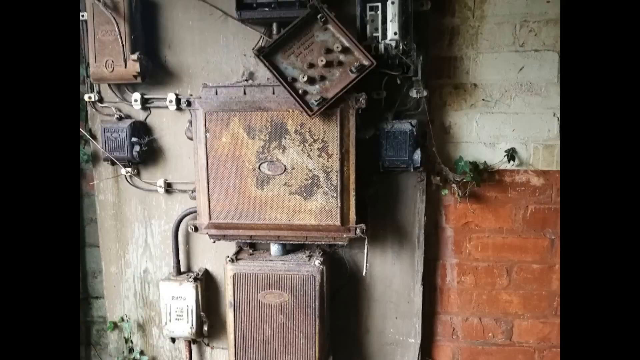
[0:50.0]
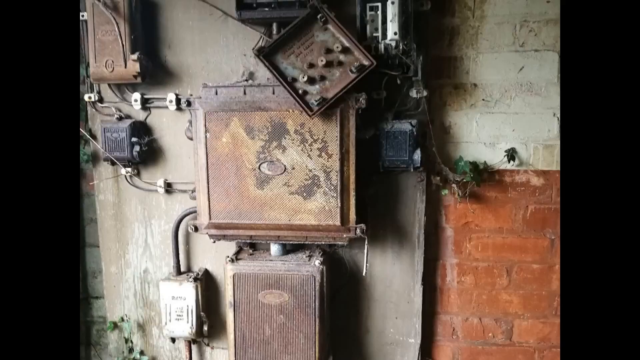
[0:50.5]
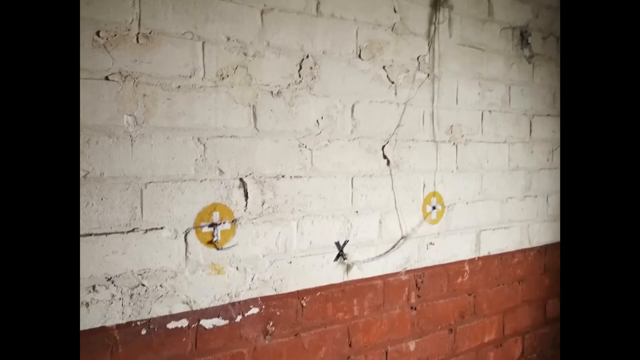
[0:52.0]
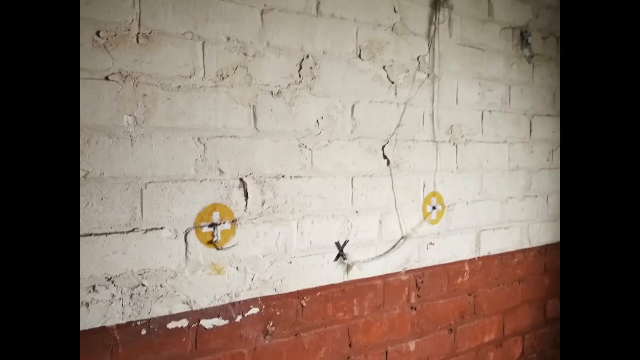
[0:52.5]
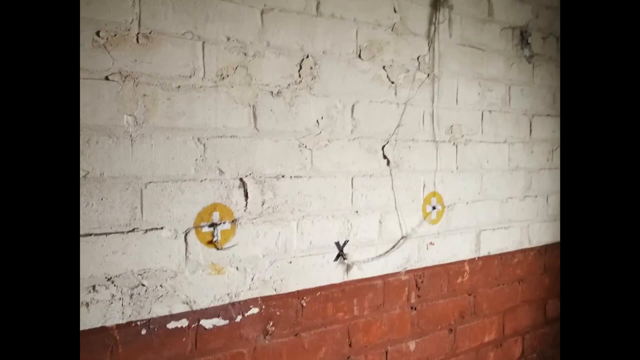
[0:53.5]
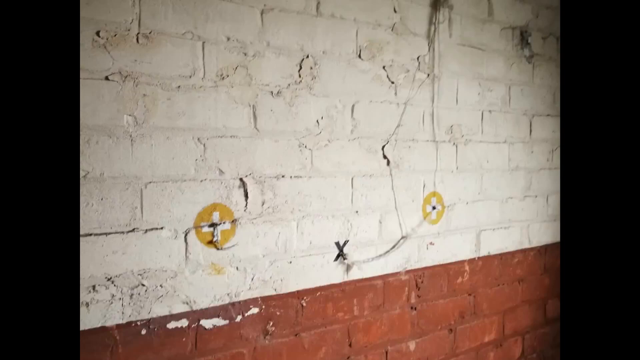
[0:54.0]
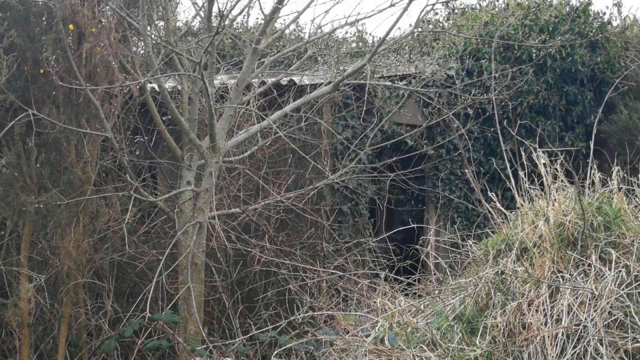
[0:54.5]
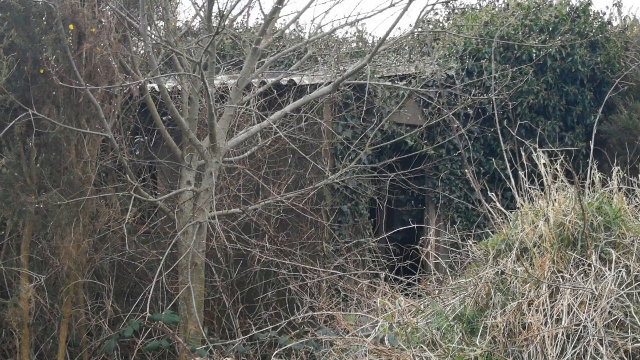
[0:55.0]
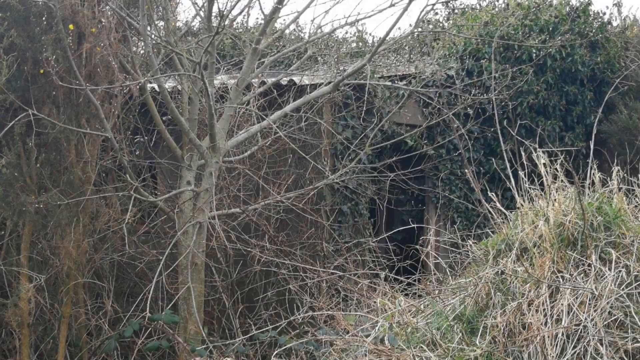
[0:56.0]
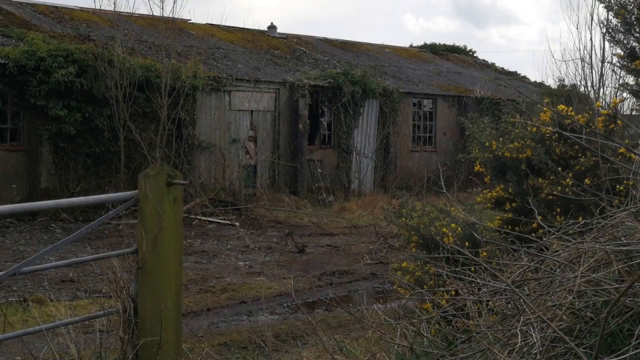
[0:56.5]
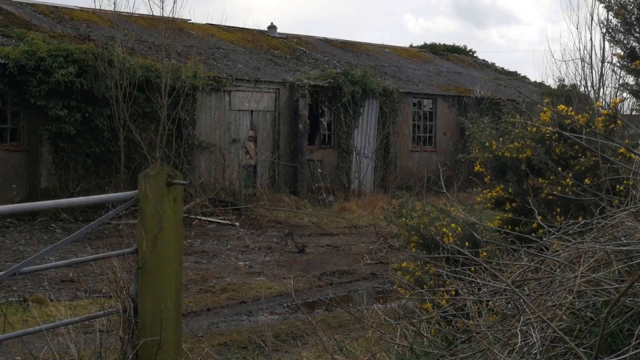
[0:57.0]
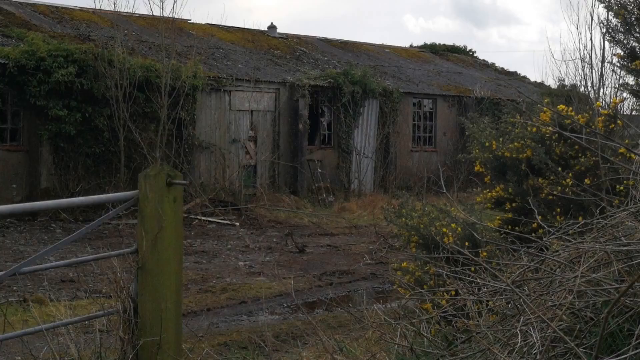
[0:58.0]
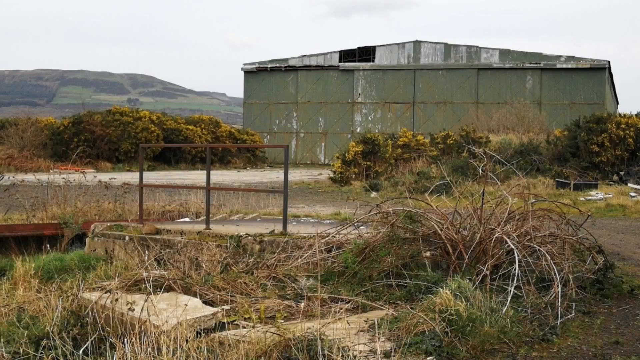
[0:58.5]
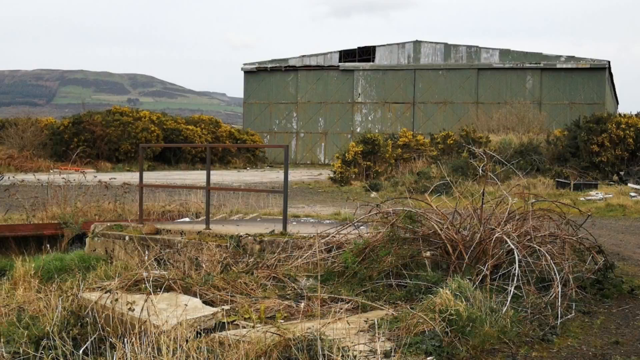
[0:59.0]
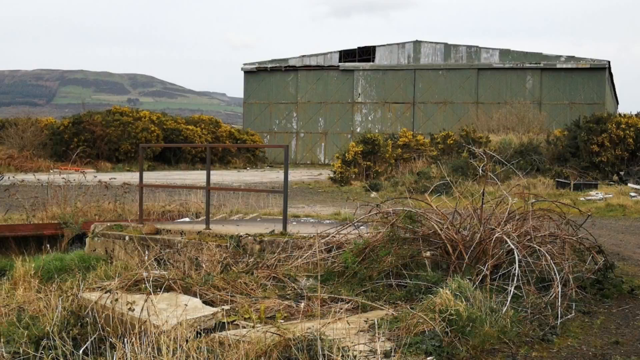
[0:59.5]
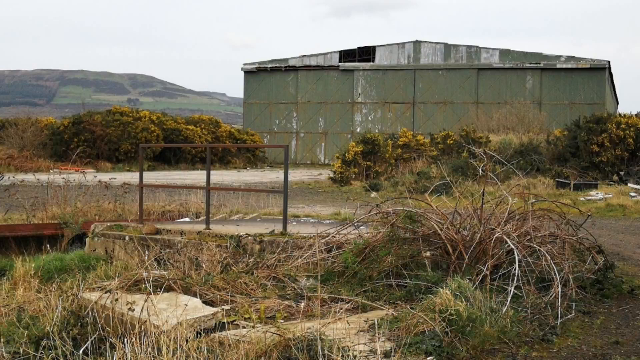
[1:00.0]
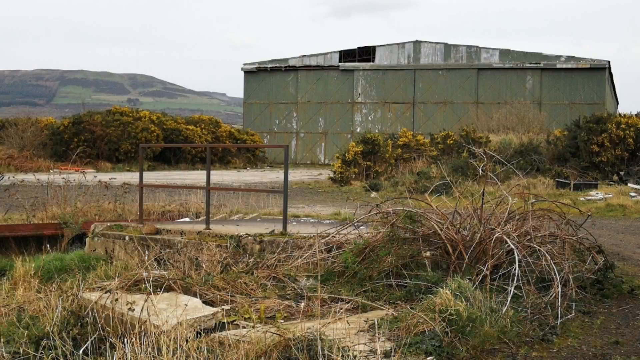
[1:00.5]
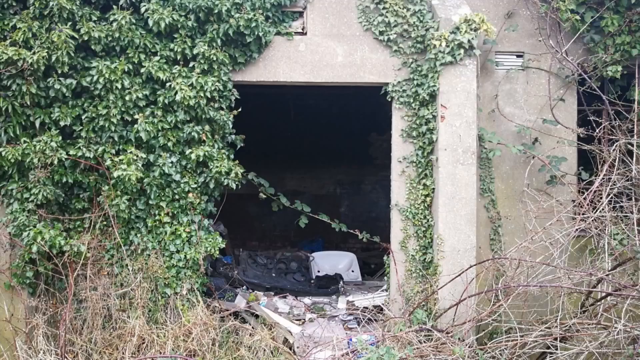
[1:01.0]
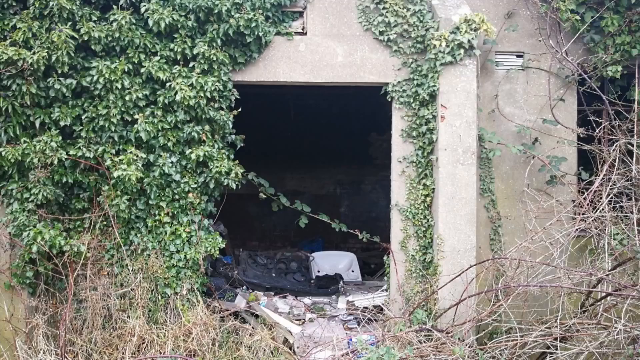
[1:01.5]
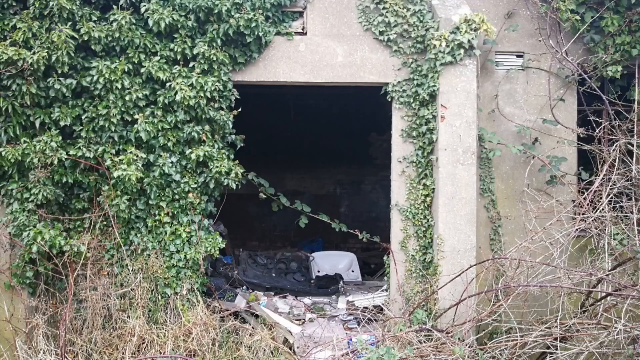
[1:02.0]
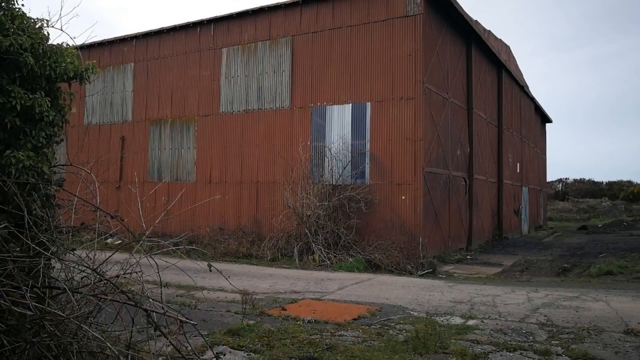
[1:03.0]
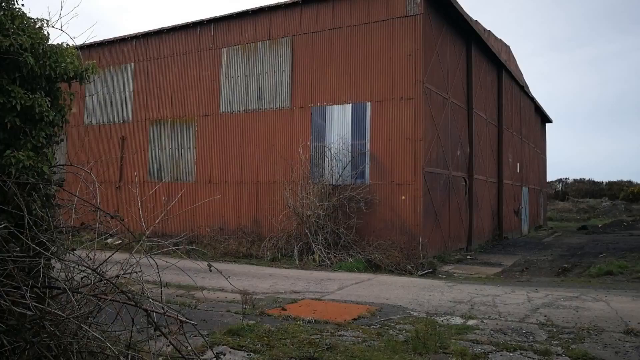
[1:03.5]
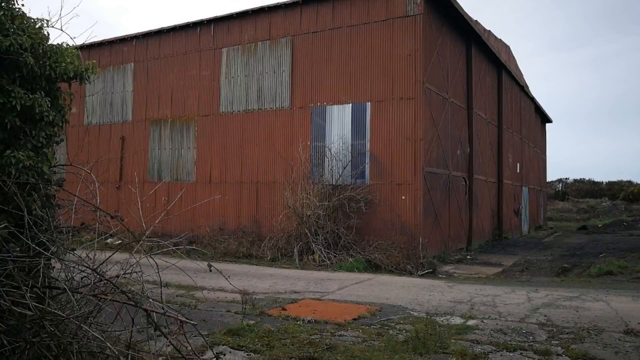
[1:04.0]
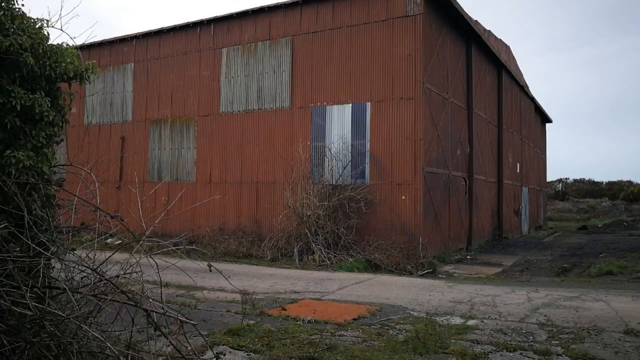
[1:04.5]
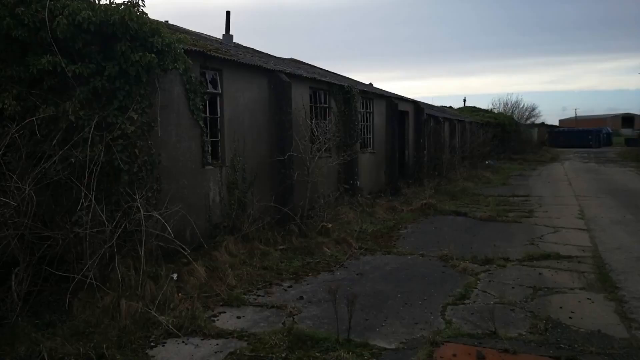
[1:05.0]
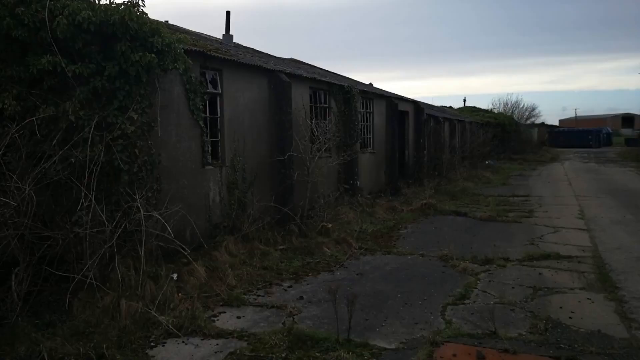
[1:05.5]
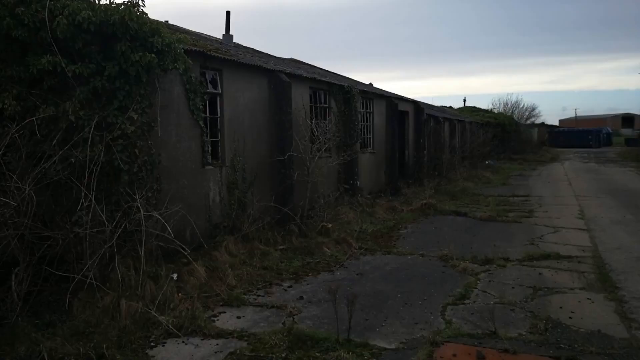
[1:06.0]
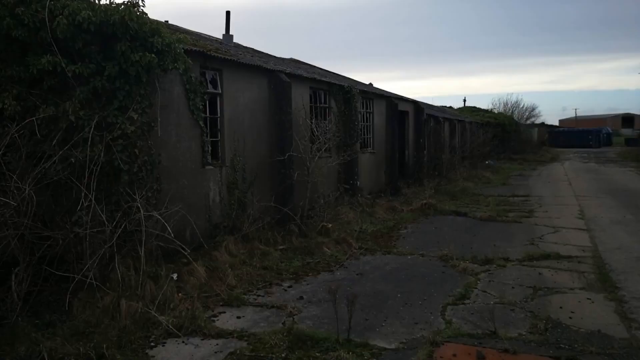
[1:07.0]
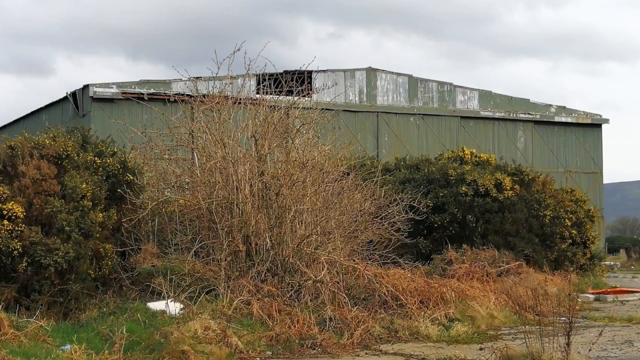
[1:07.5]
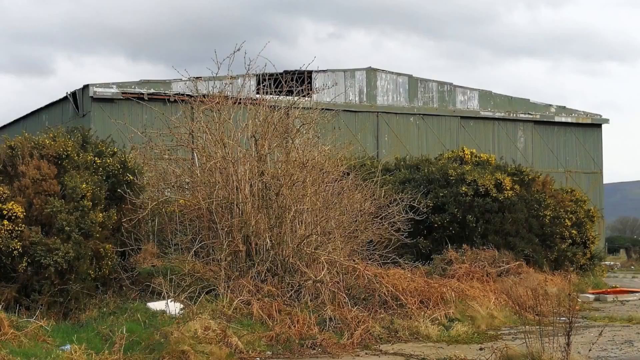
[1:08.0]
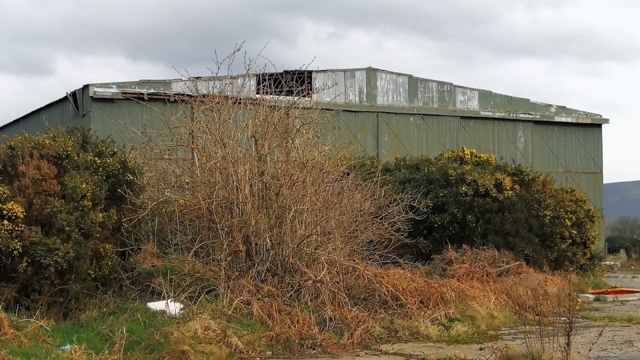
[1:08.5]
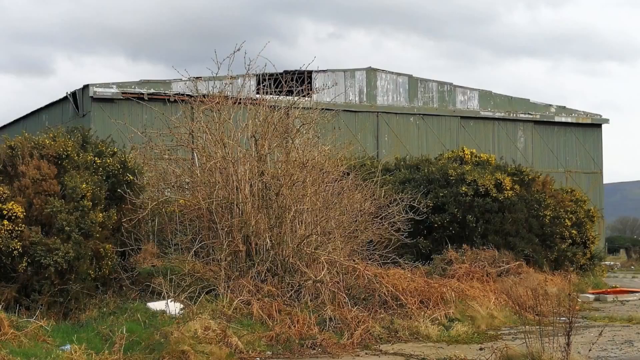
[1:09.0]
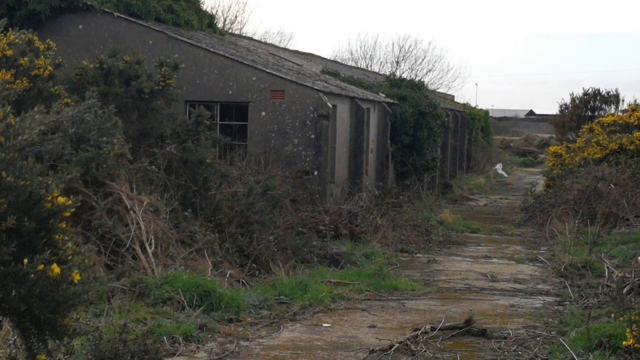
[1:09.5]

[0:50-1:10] Images show an abandoned structure in the daytime in the countryside. There is not much inside except pieces of furniture that had begun to rot. Multiple sides of the structure apparently are shown from the outside; some of it appears to be metal and other parts are cement. The roof looks like it is shingled but has deteriorated. The multiple-pane windows are shattered. Vegetation is growing around the building, with thicket outside as well. A mountainside is in the distance. The structure is shown from different areas. It is on a street that has also deteriorated; the street is cracked, with grass growing between the cracks. The structure has been taken over by nature inside and out, with thicket and trees all around it, and its metal parts or sides are rusting.